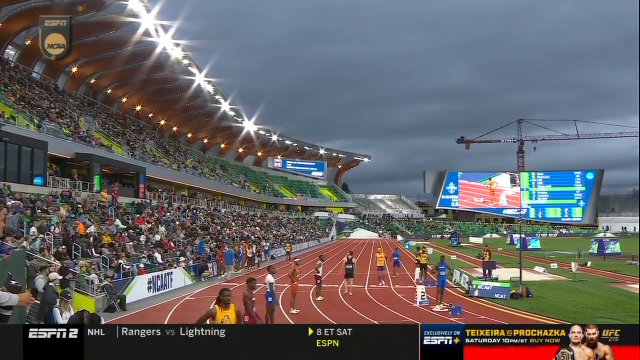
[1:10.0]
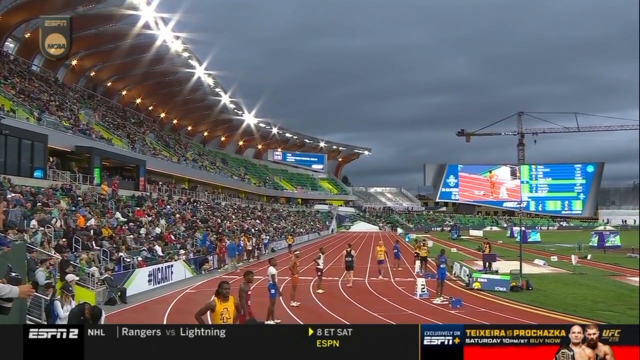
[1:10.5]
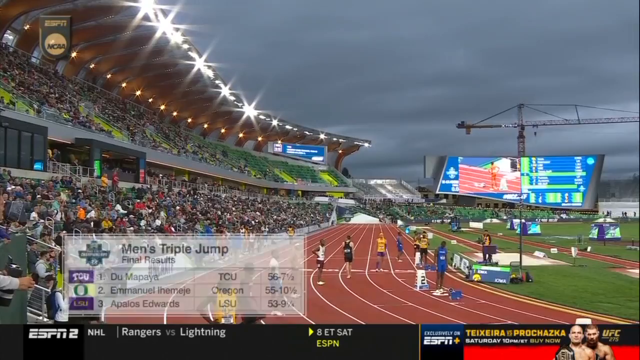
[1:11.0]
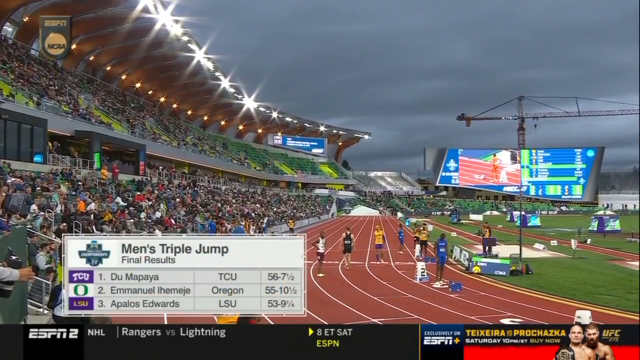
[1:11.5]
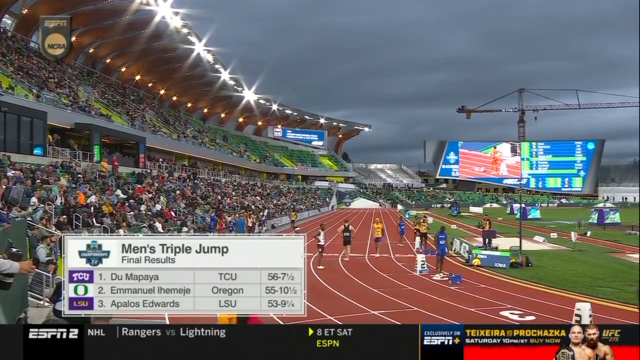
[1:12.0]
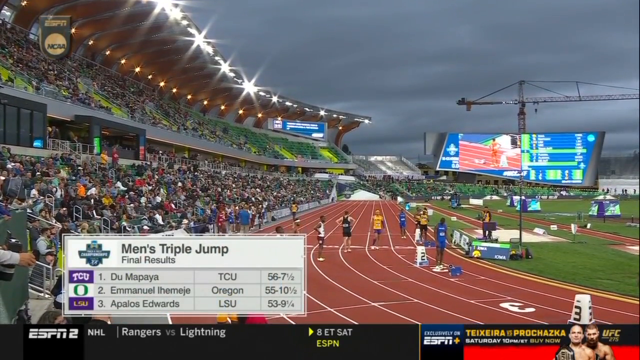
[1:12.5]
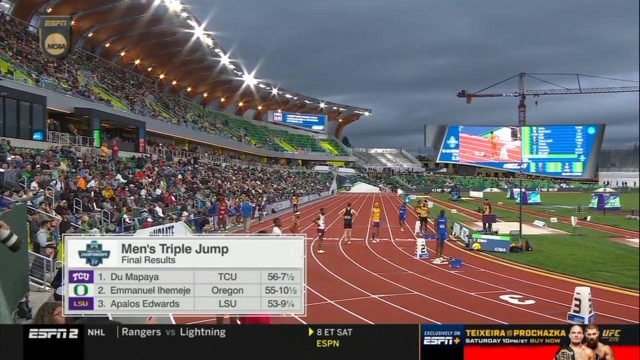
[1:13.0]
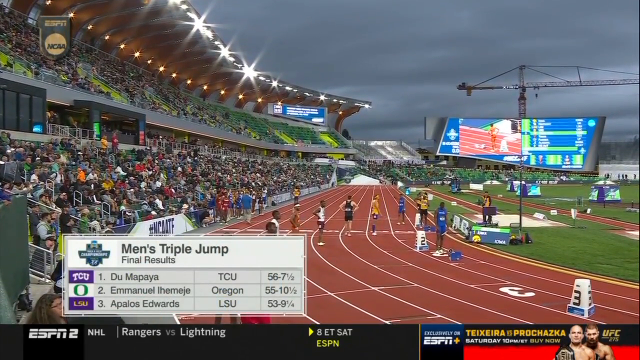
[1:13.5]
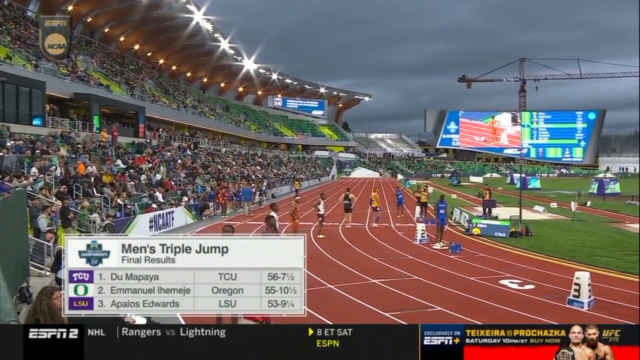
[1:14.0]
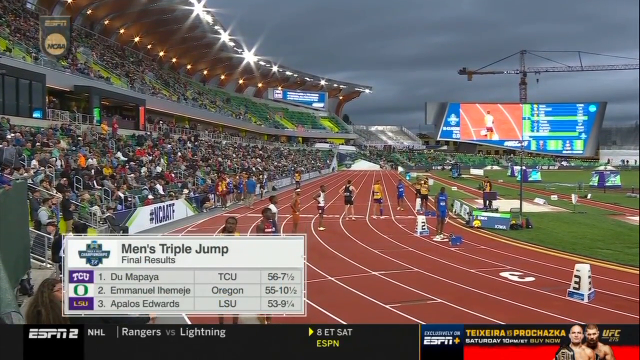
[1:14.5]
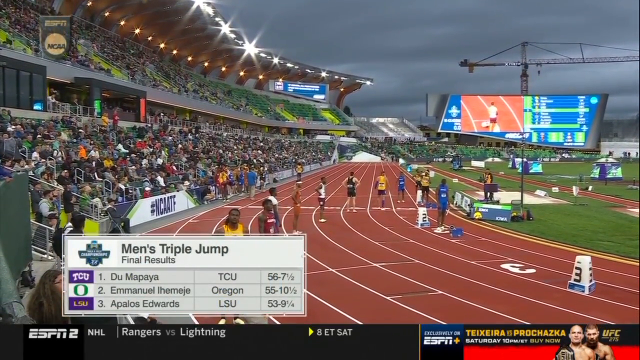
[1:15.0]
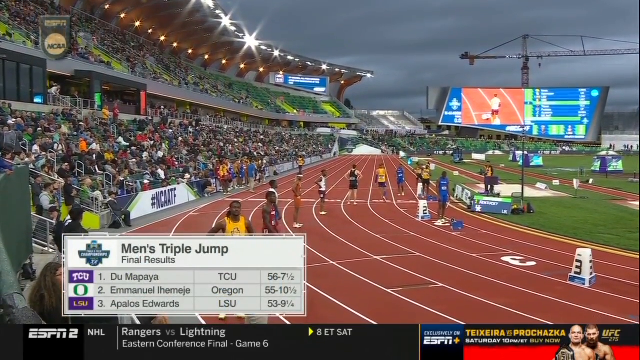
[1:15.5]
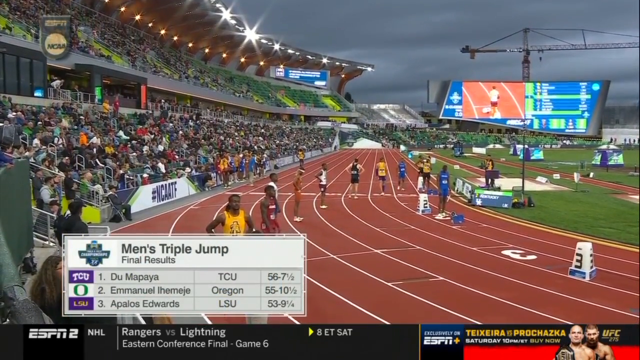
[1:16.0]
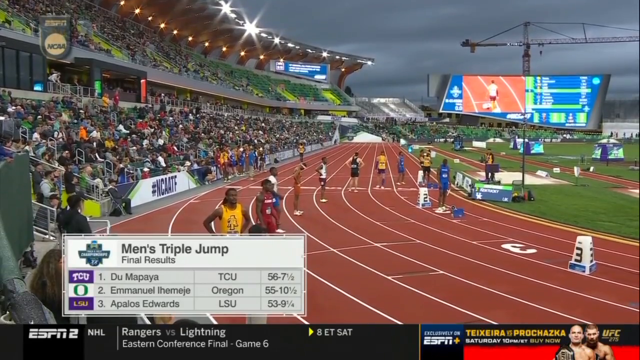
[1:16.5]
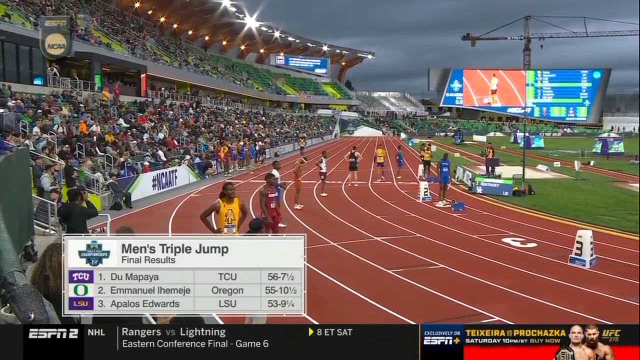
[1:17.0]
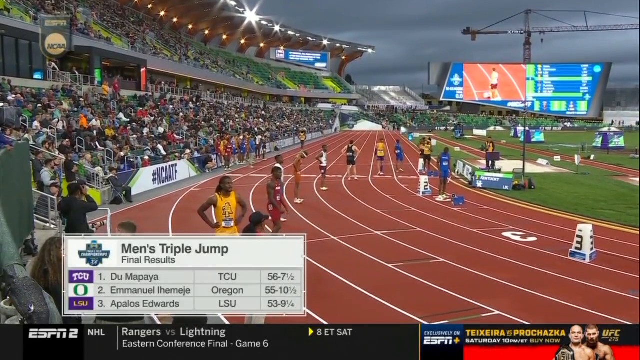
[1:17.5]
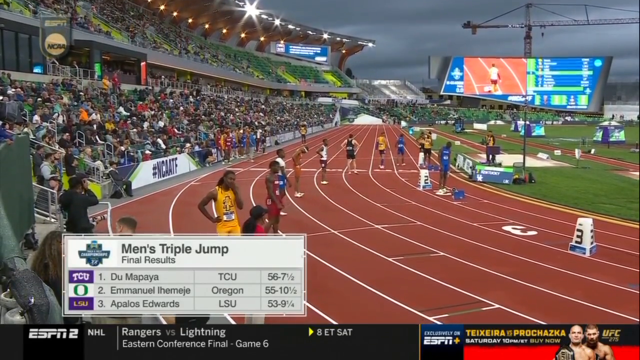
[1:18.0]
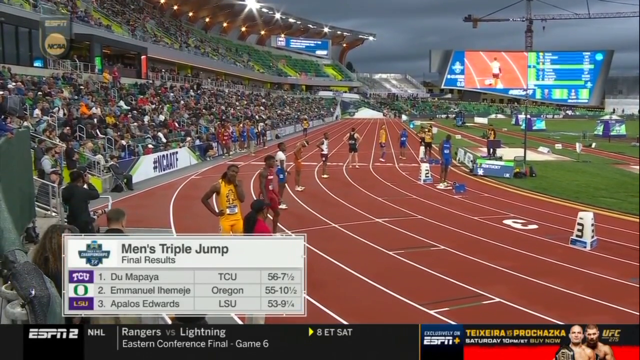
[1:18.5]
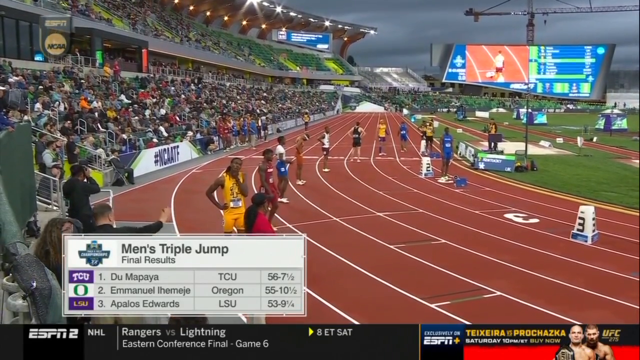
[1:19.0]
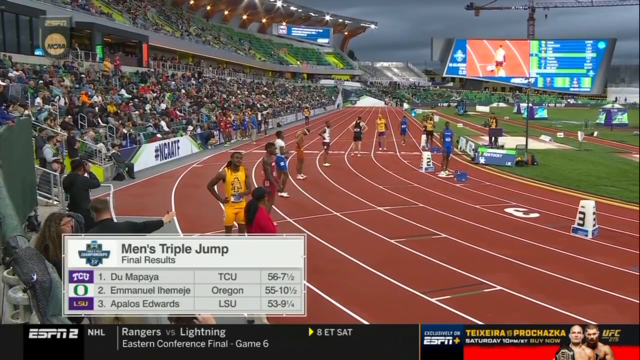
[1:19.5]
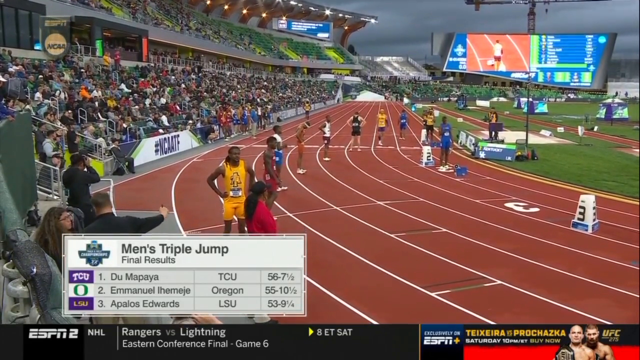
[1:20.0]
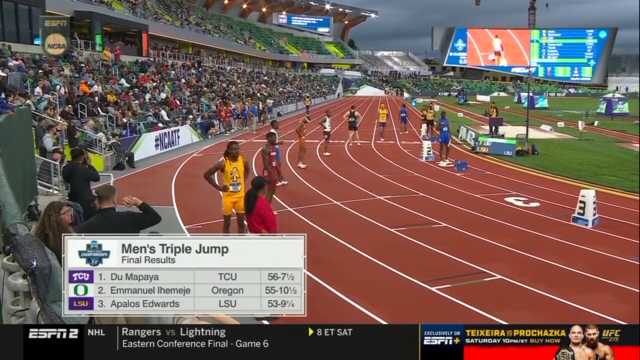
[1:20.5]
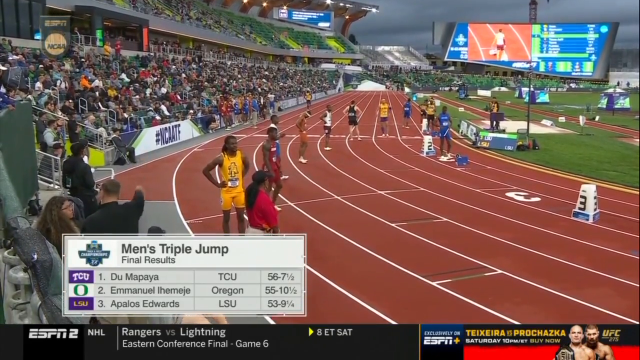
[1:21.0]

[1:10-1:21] About eight runners in different clothing and colors appear to be getting ready to race, as the camera pans down from the sky to the runners. A white text box in the lower left appears to be labeled "men's triple jump final results". It lists Duma Paya from TCU in first place with a measurement beginning "56 and 7"; in second, with the O for Oregon, Emmanuel Ihemeje from Oregon with a measurement beginning "55, 10"; and, apparently in third, Apollos Edwards from LSU with a purple logo, with a measurement beginning "53 and 9". The runners wait around, some with their hands on their hips. A small screen in the upper right seems to show replays of the events.